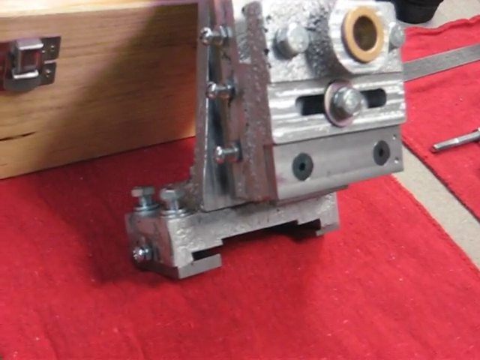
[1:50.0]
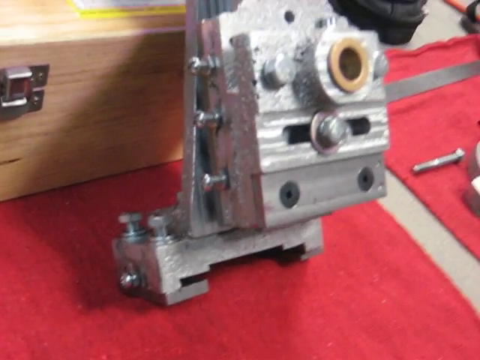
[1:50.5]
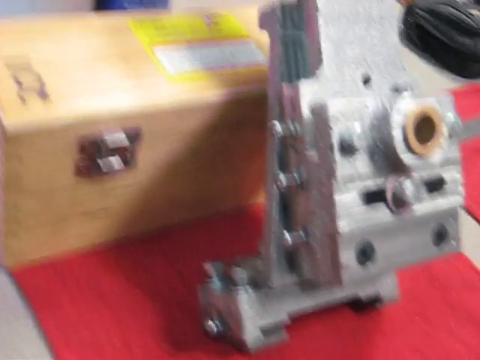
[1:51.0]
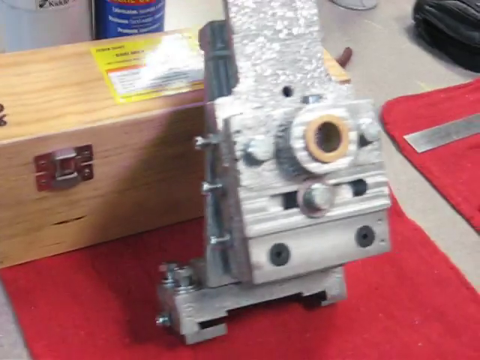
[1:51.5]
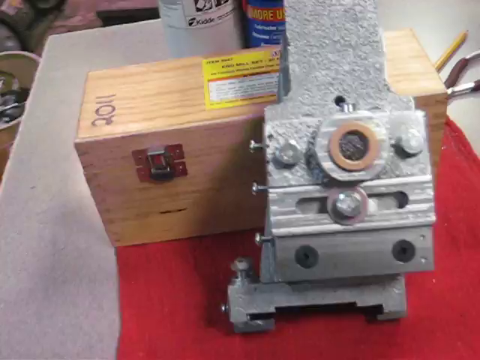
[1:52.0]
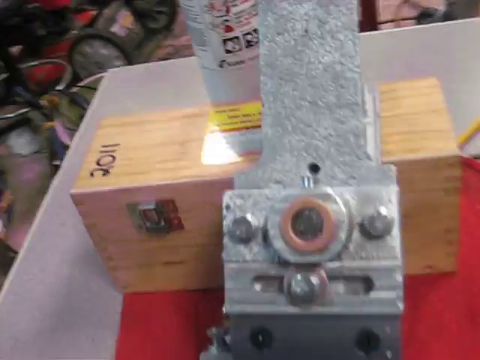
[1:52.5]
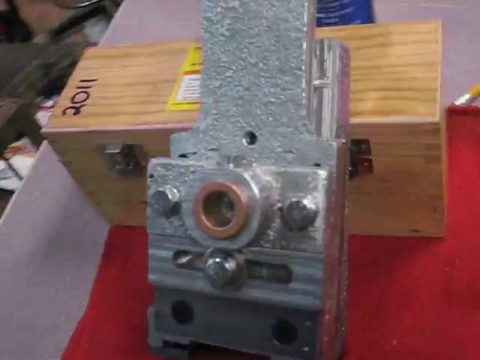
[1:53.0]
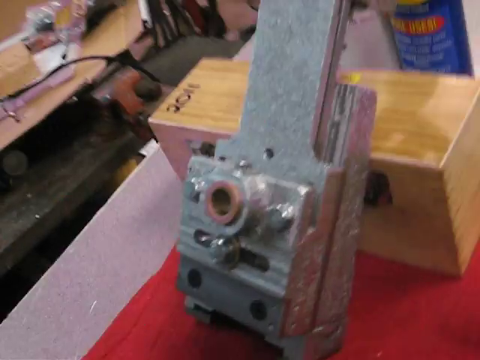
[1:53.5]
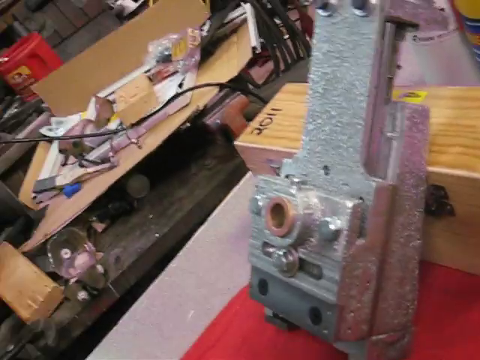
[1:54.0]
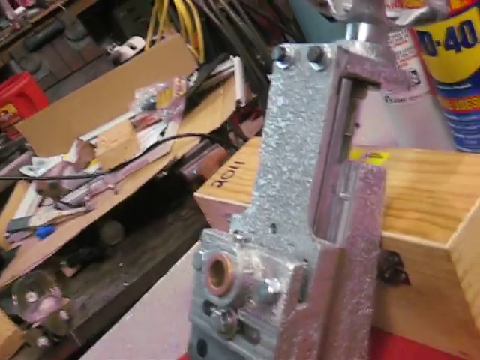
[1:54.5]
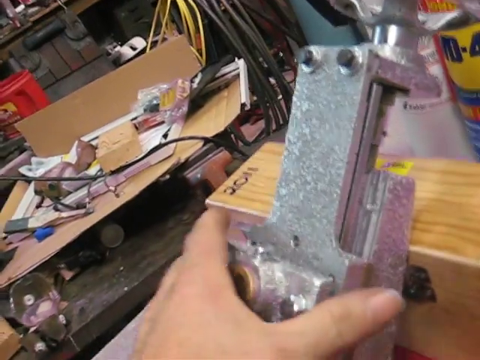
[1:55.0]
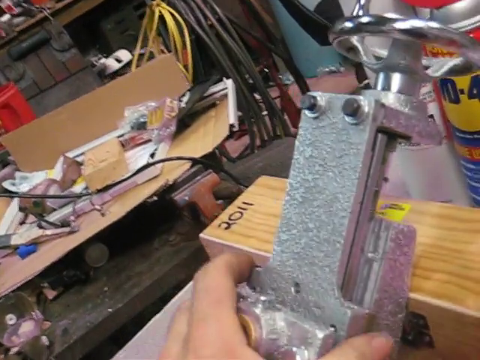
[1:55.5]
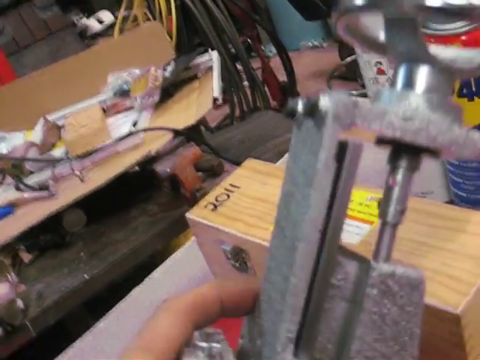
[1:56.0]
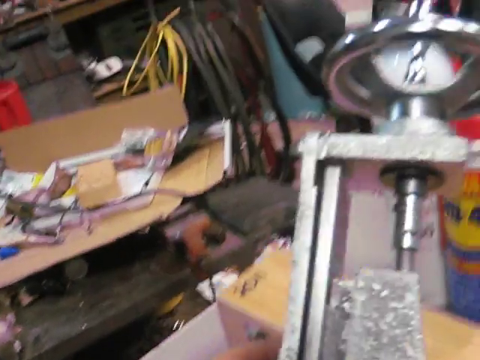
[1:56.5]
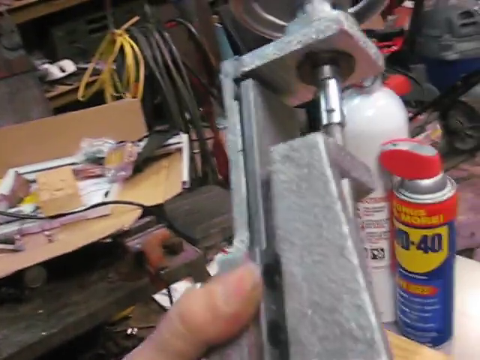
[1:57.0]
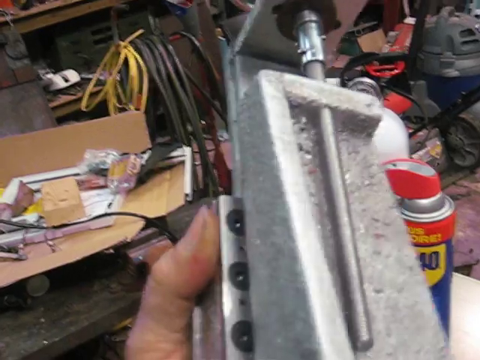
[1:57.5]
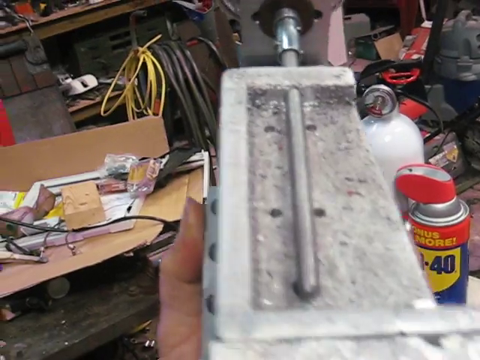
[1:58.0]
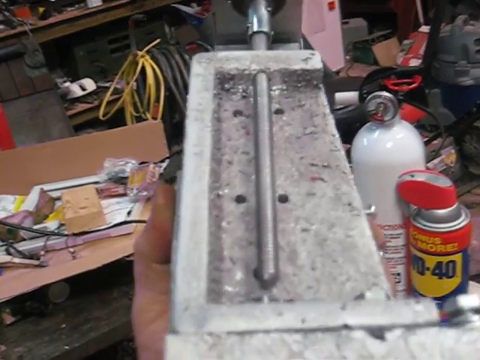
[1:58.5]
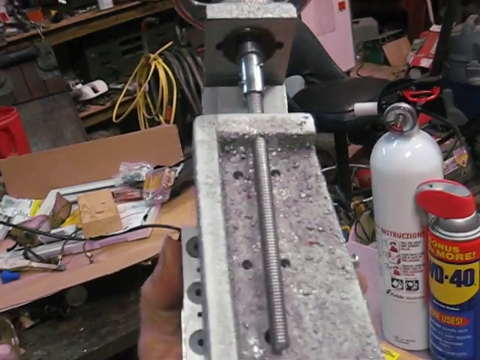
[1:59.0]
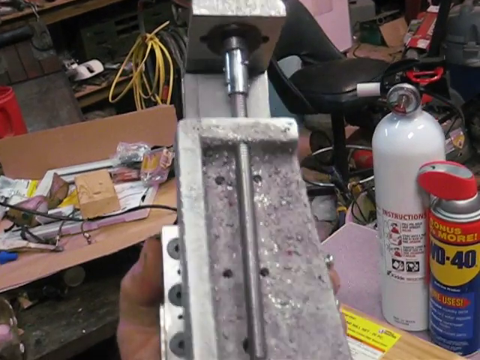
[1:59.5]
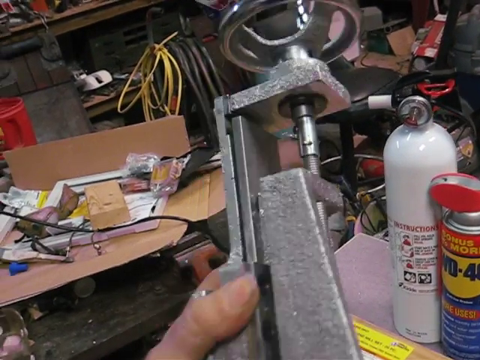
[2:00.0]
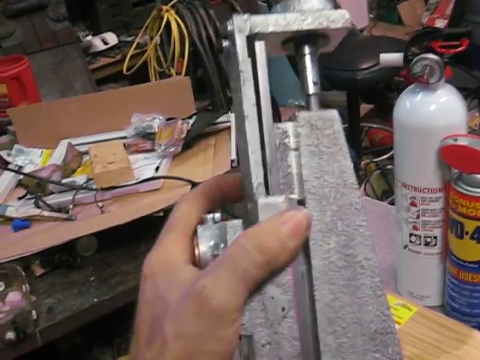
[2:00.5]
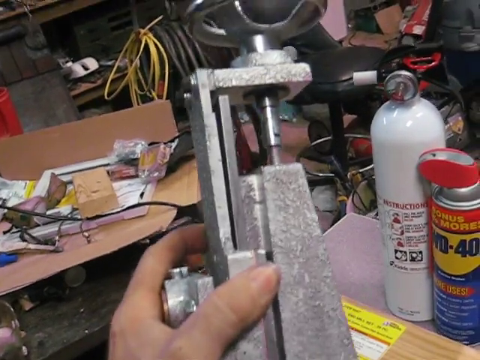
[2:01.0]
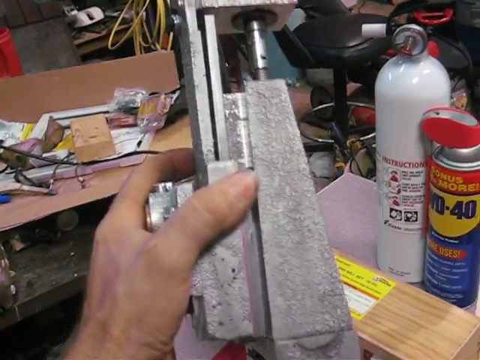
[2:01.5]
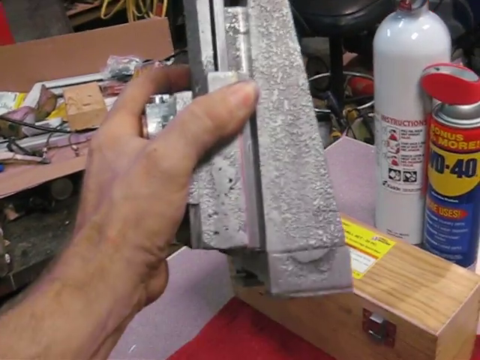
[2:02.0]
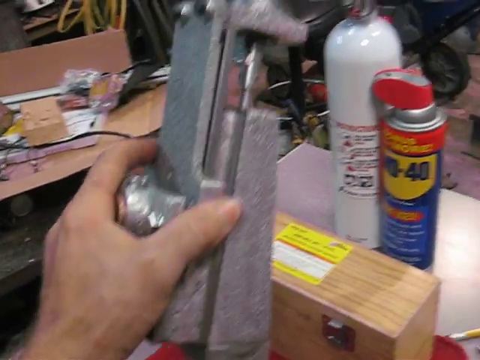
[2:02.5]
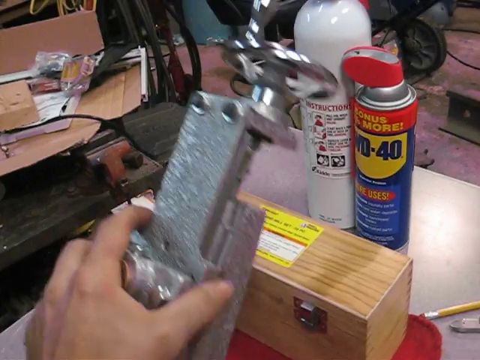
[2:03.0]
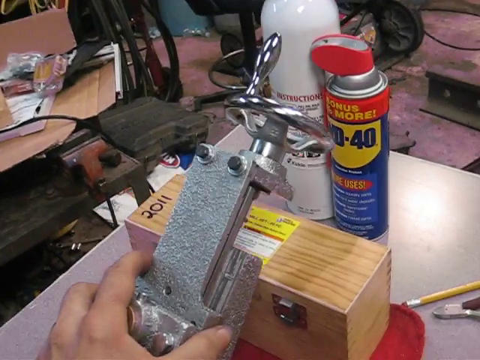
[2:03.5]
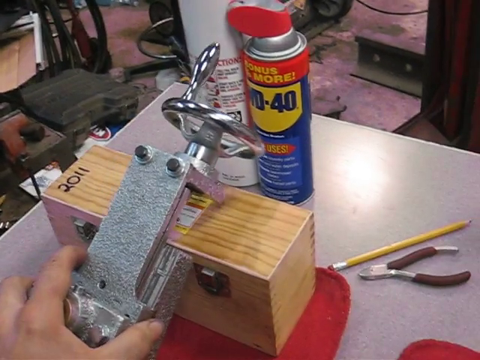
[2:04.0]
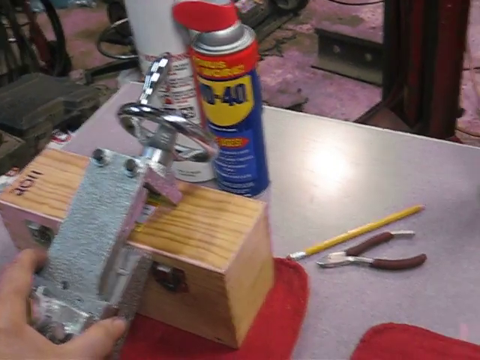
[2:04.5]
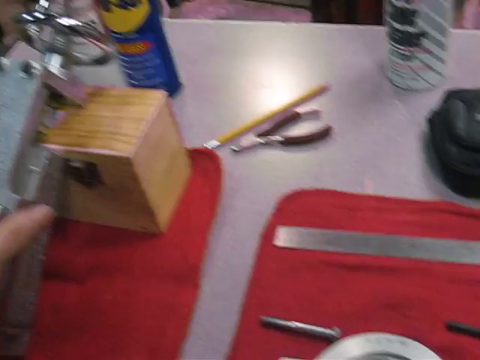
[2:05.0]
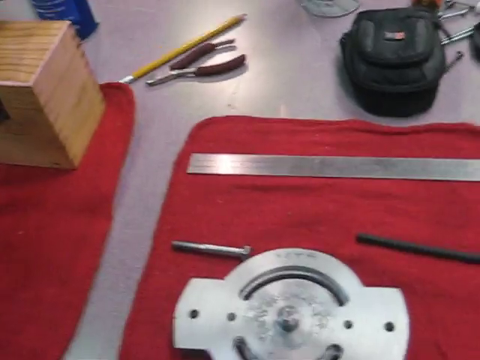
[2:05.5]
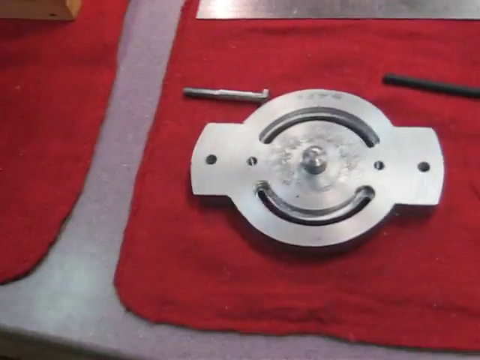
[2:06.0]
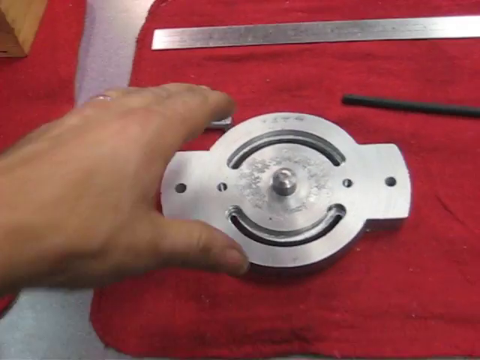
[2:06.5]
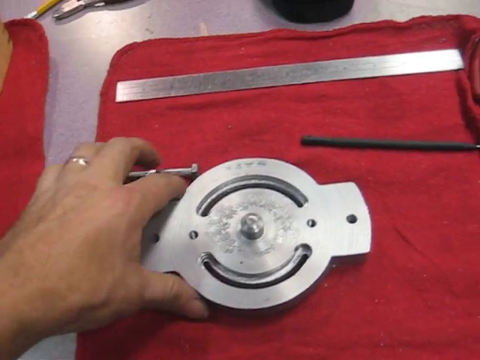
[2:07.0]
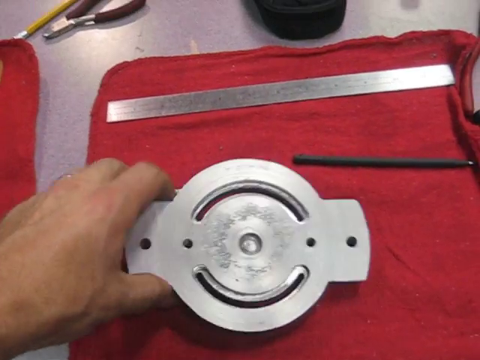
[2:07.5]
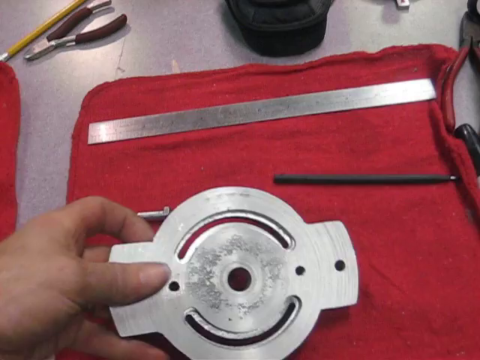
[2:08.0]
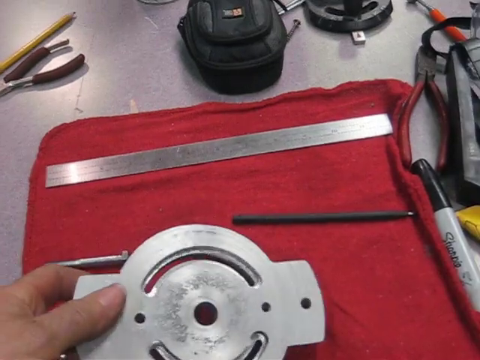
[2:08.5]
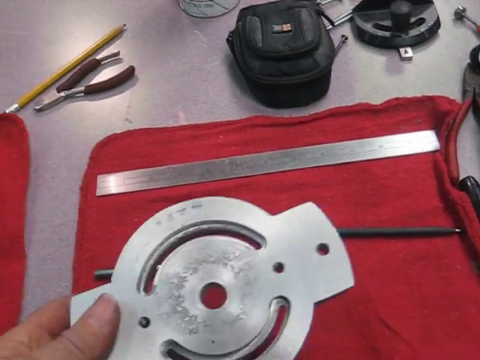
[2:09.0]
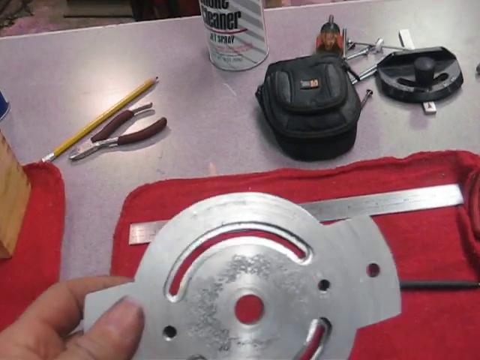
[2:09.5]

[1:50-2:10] A tool made of pure metal, kind of silver in color, is shown. It has a square plate with a hole in it, many bolts on it, and a round copper part around the hole. The camera turns to show another angle, and the tool seems to be some sort of clamp. A person grabs the tool with their left hand, showing different angles of it; a rod and a wheel are attached to it. They pick it up and put it back down, then pick up another disc, which is also silver with holes in it. The clamp-like tool rests against a wooden box, and underneath the box is a red carpet or mat.